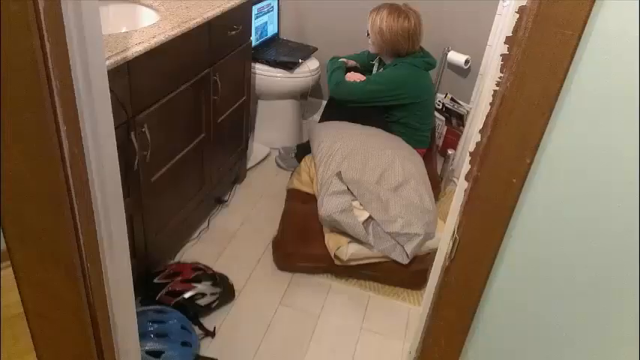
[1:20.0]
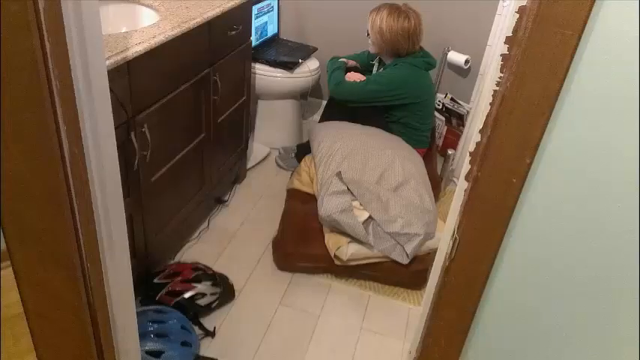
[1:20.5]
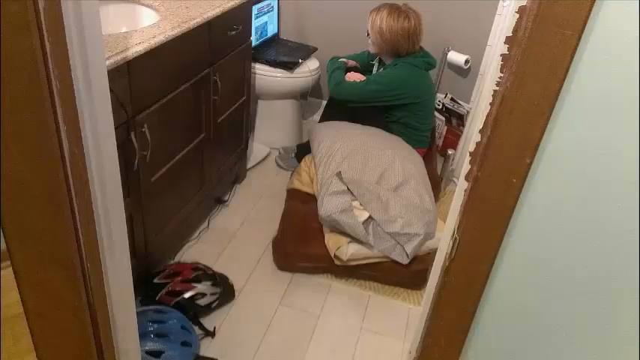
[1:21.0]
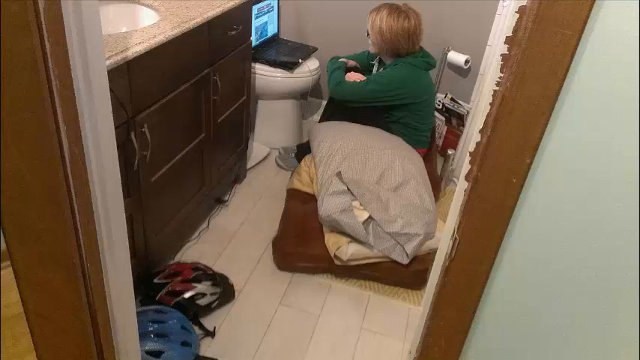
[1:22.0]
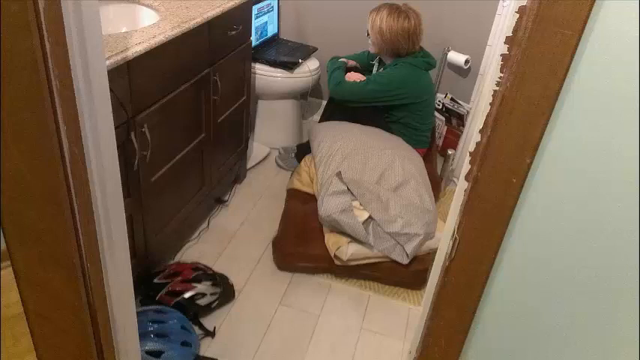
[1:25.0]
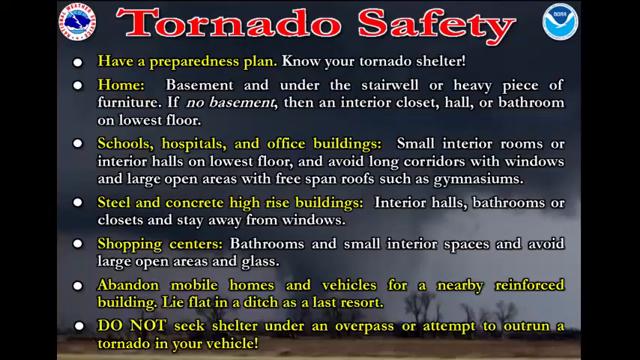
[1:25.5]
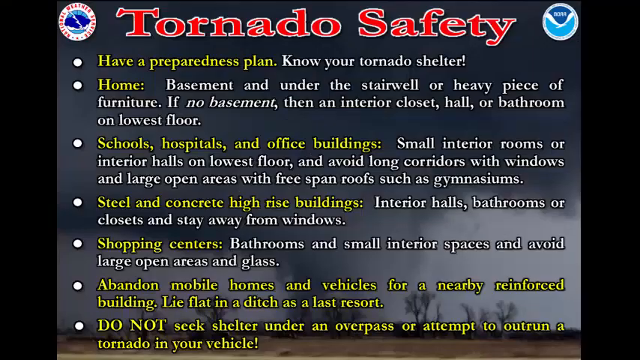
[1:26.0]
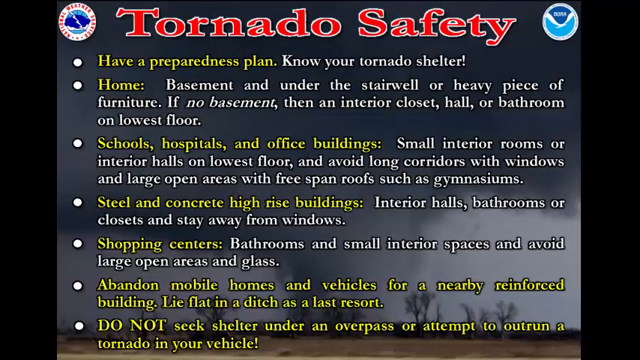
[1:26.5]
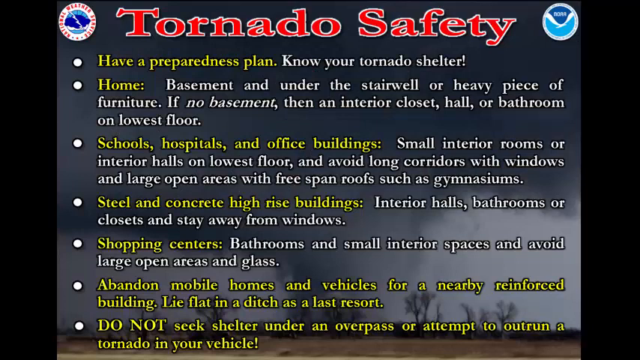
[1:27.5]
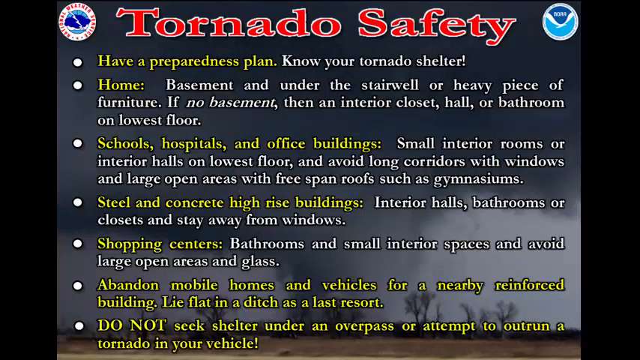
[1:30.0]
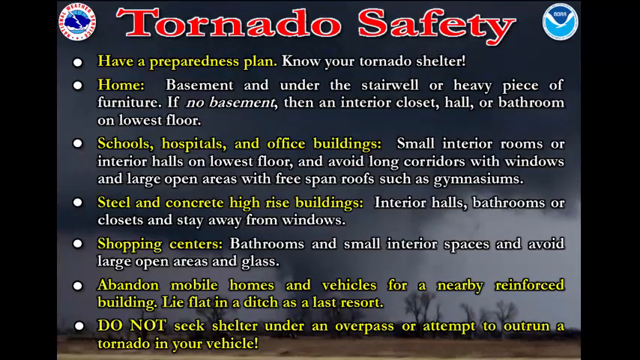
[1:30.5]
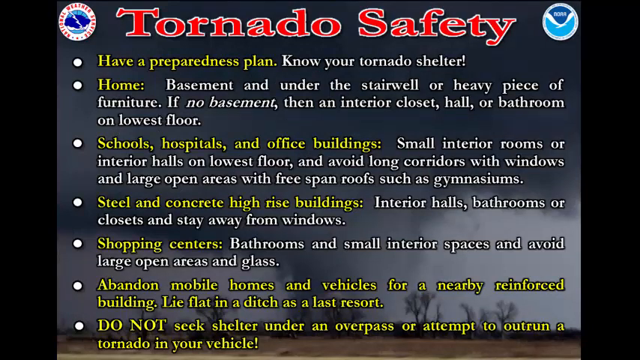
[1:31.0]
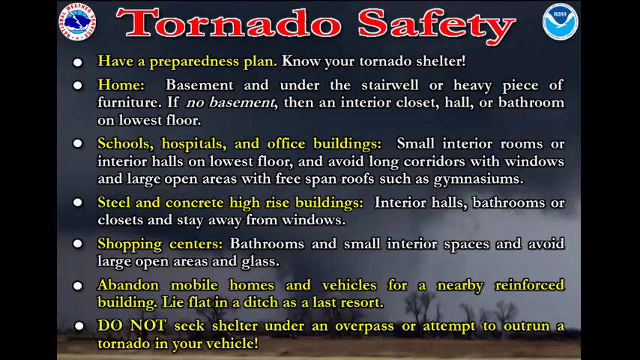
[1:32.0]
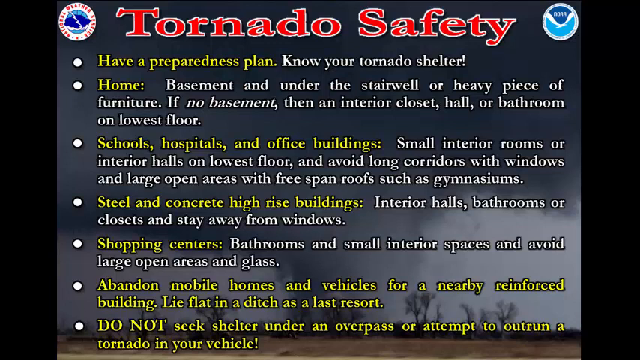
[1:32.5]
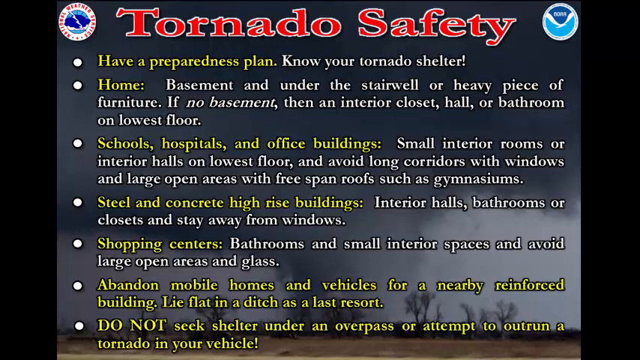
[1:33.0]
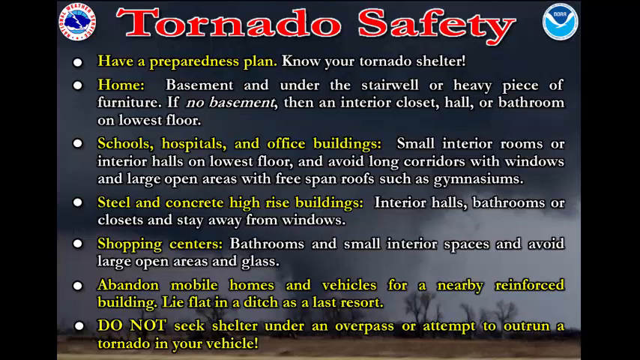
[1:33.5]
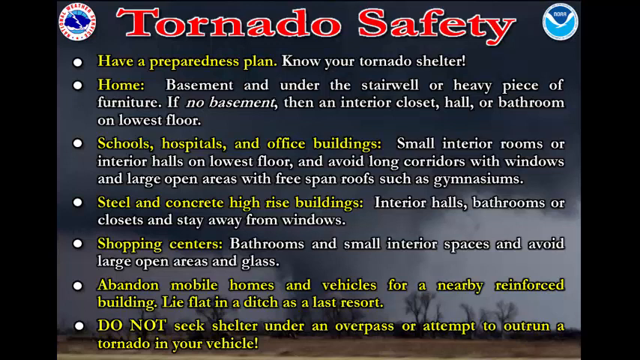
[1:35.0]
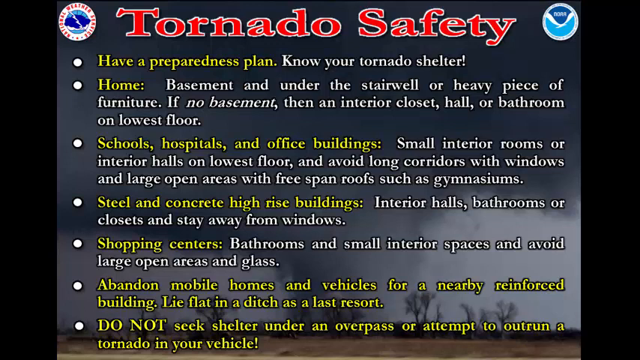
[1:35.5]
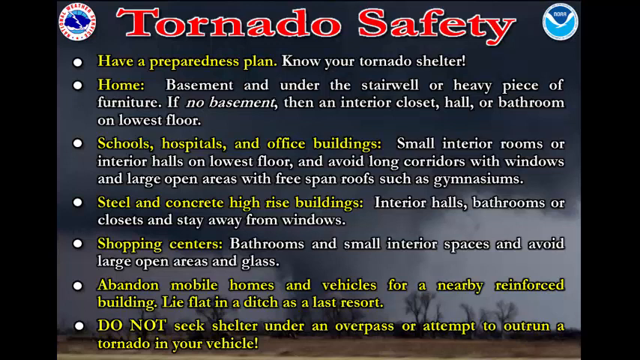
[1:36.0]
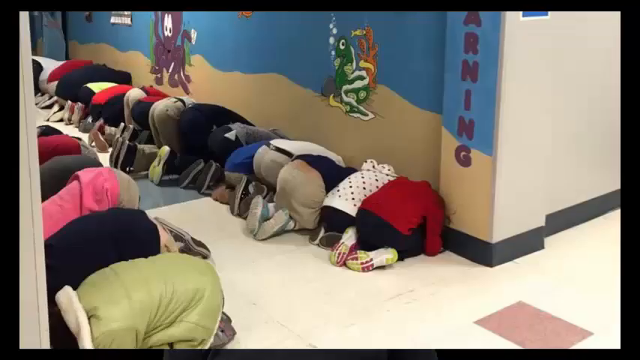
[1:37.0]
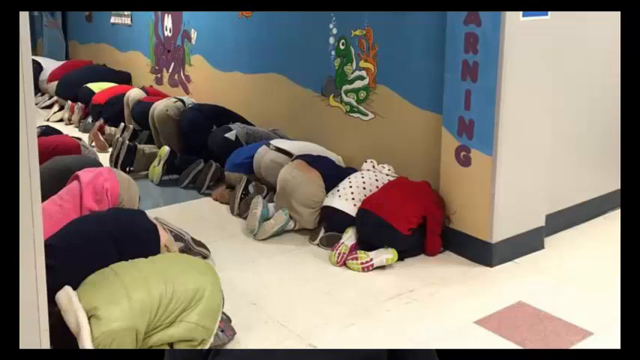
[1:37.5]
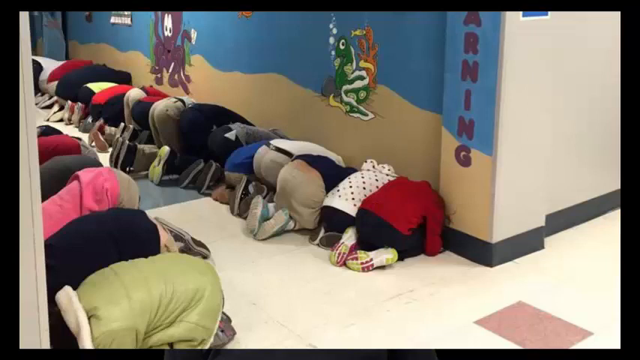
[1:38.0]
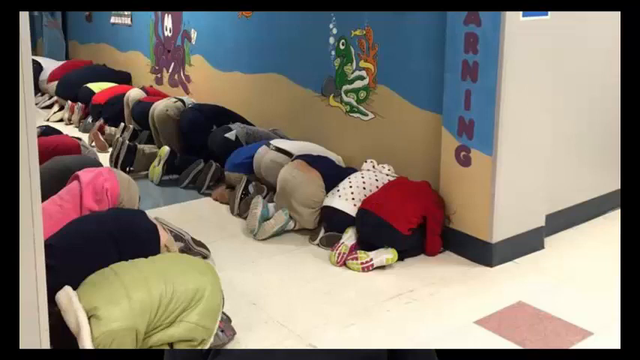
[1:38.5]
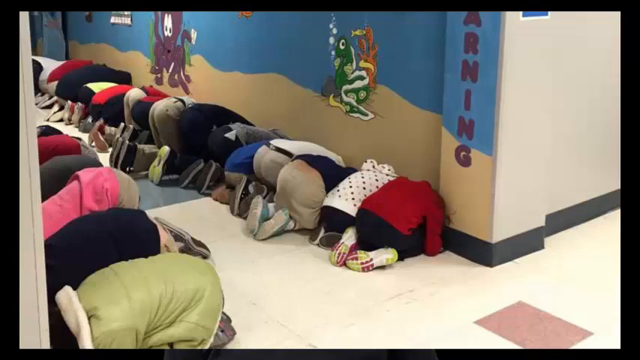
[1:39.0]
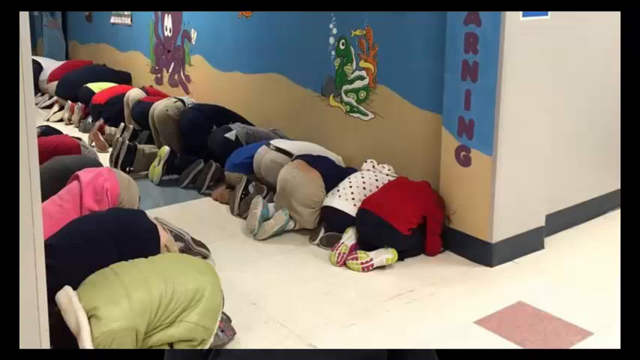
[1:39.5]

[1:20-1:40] A woman in a green sweatshirt, black pants and sneakers sits on the floor of a bathroom with her knees close to her chest. She sits on a cushion with two pillows next to her. A laptop is on the top of her toilet, and she appears to be watching something on it. The video then cuts to another slide of information, which includes: "Know your tornado shelter. Home: basement, and under the stairwell or heavy piece of furniture. If no basement, then an interior closet, hall, or bathroom on the lowest floor. Schools, hospitals, and office buildings: small interior rooms, or interior halls on the lowest floor. Avoid long corridors with windows and large open areas with free-span roofs such as gymnasiums. Steel and concrete high-rise buildings: interior halls, bathrooms or closets and stay away from windows. Shopping centers: bathrooms and small interior spaces and avoid large open areas and glass." It also says "Lie flat in a ditch as a last resort. Do not seek shelter under an underpass."